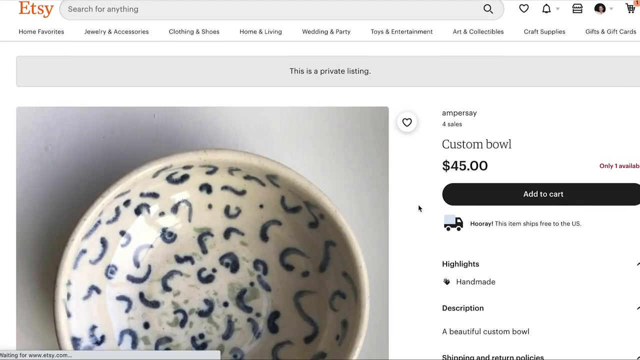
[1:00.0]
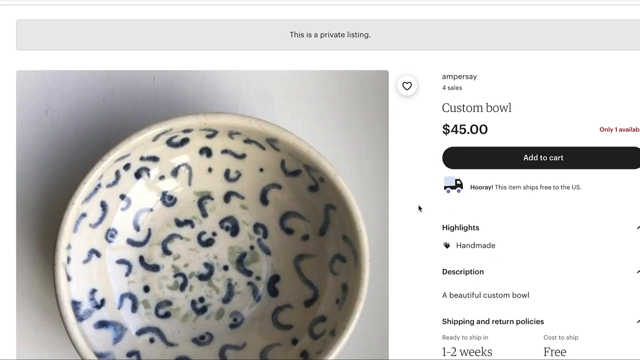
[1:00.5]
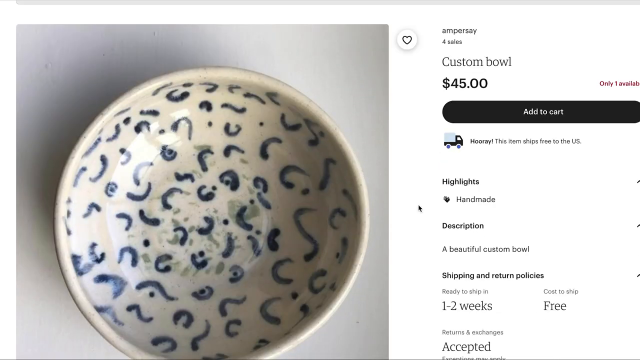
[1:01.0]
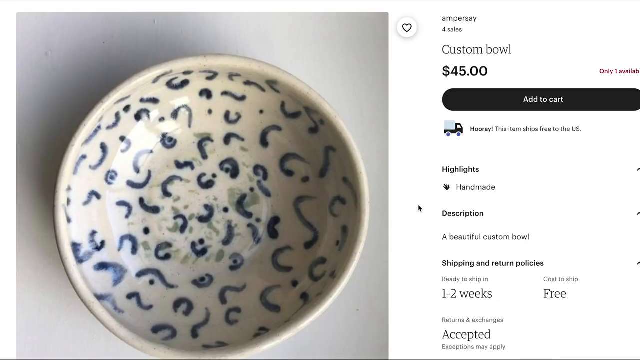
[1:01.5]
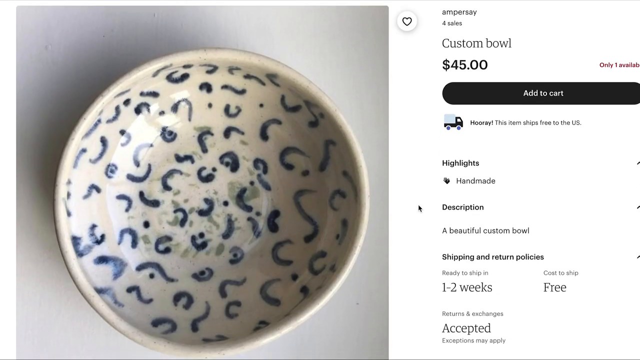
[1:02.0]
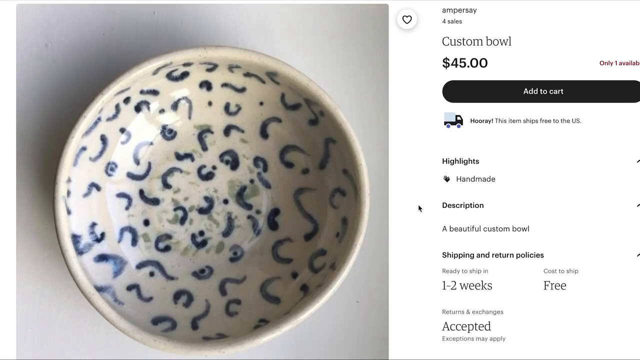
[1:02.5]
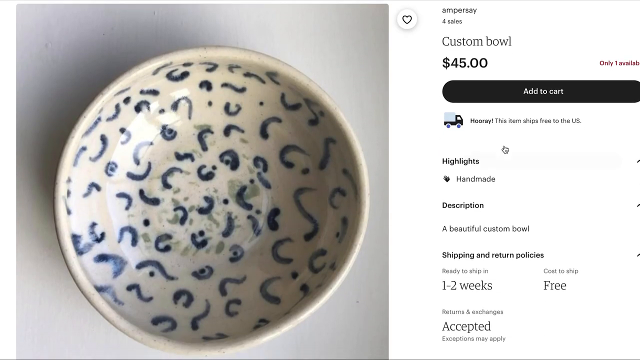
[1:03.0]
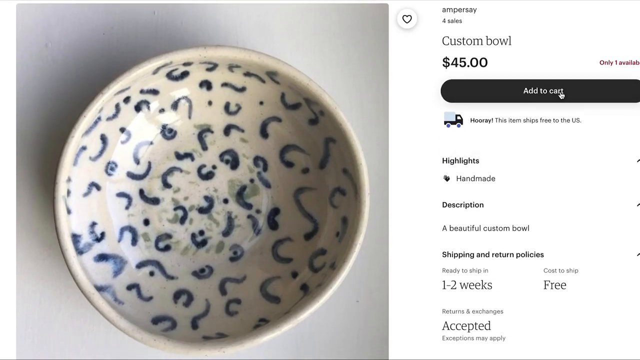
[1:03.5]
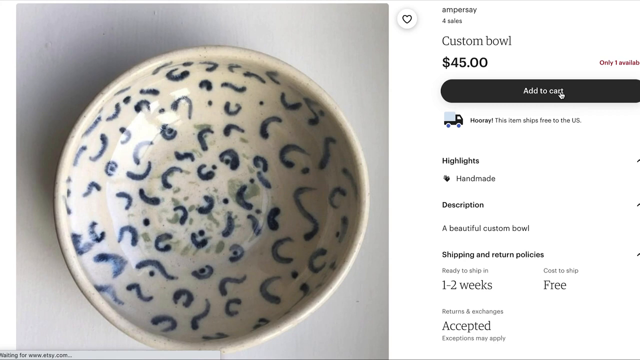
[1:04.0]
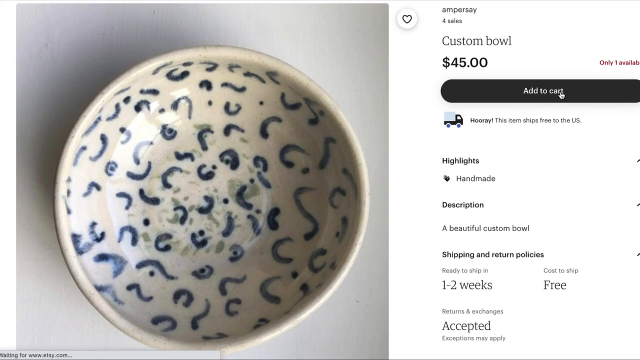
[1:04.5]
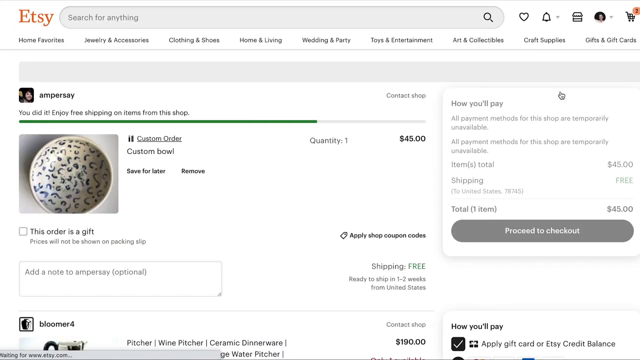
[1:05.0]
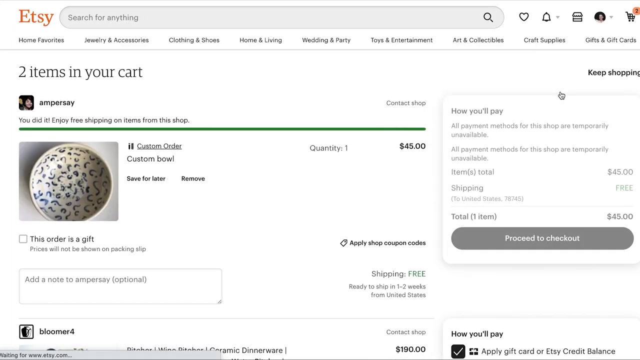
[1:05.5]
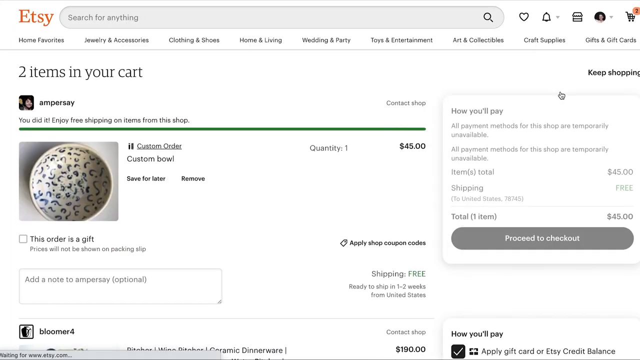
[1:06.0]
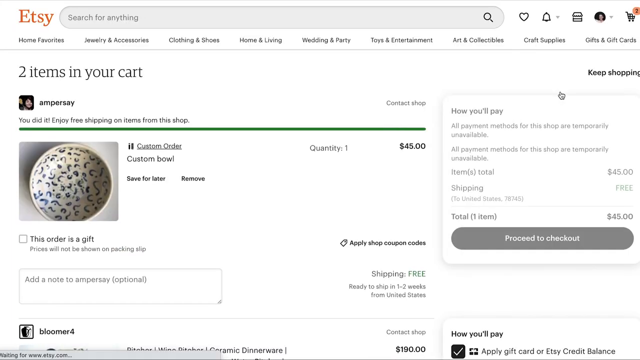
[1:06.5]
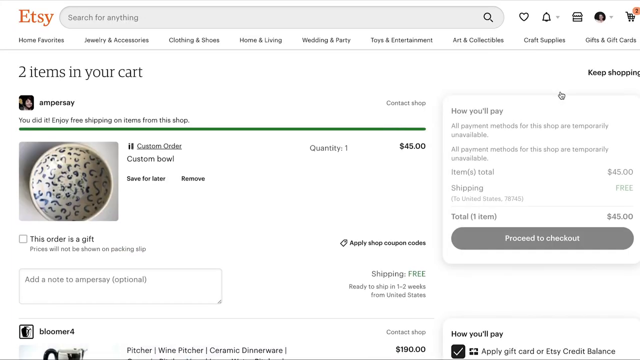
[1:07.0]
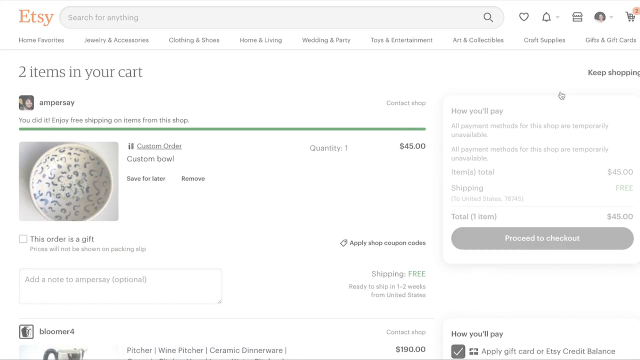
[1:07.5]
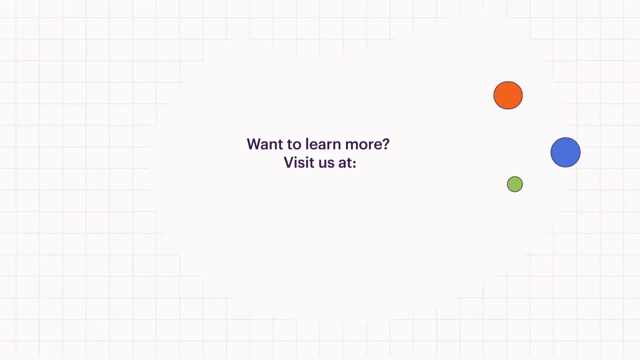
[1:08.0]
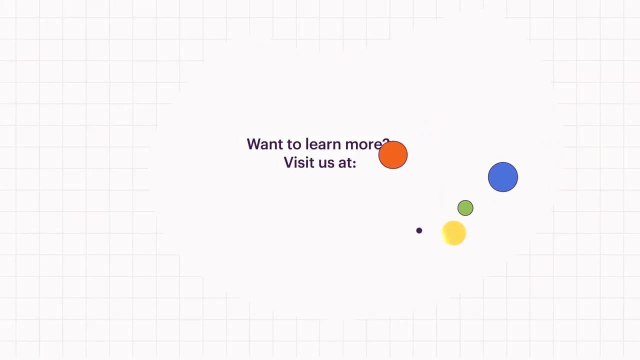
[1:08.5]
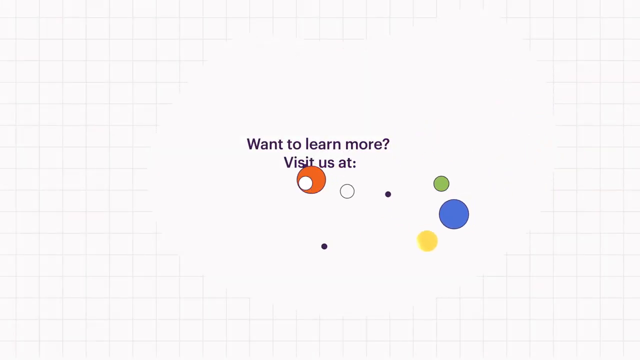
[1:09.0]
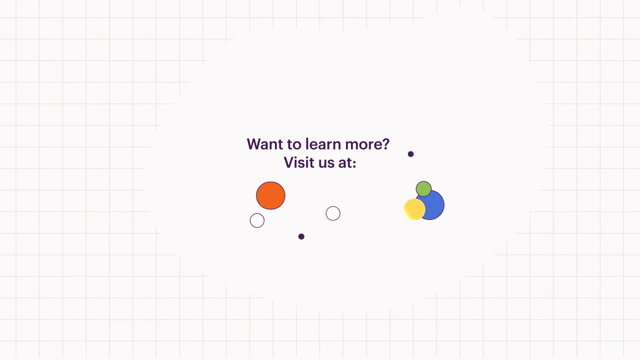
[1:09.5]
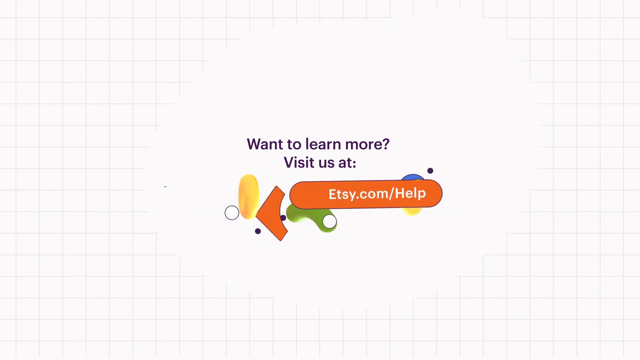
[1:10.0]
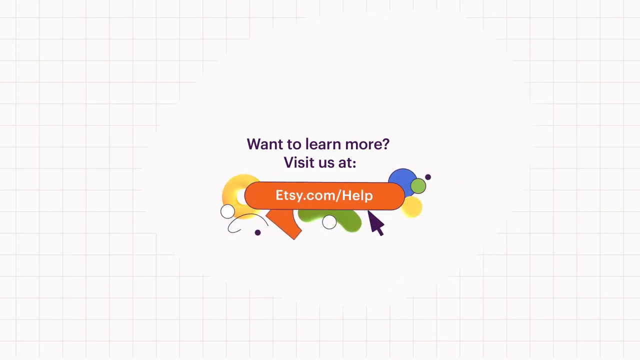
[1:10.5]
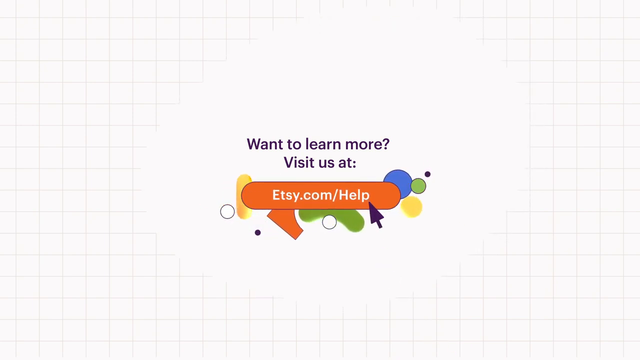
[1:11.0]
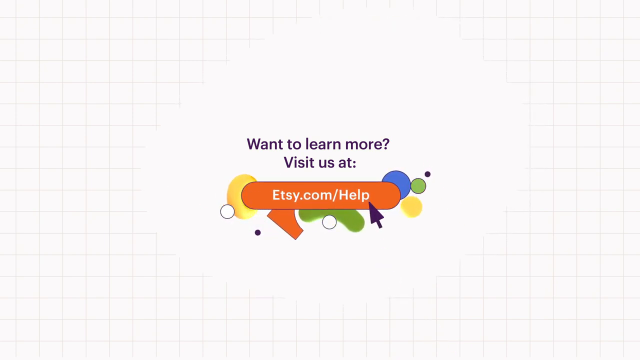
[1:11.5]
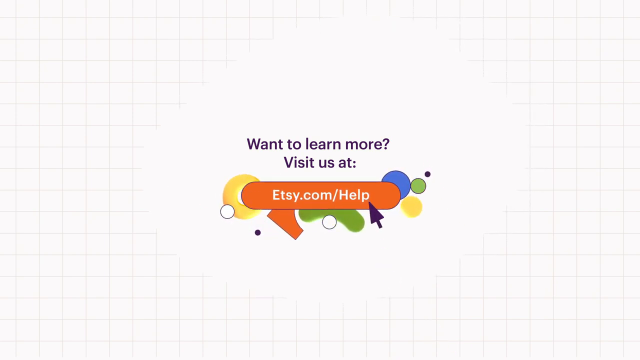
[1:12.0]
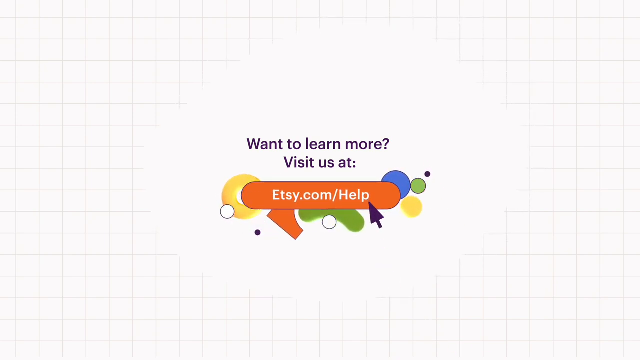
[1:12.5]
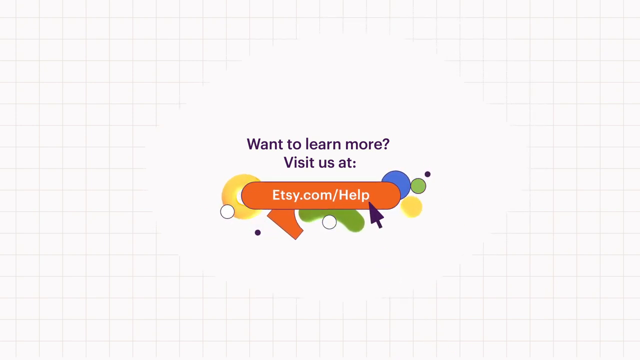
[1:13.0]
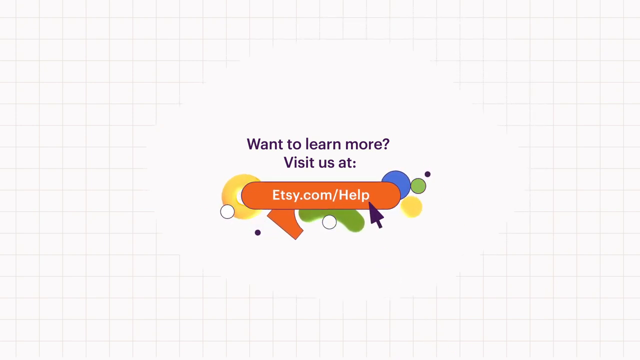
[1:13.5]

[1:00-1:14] The custom bow is shown at $45. It is added to the cart and the purchase proceeds to checkout. At the end, the screen shows where to visit them to learn more: "etsy.com/help".